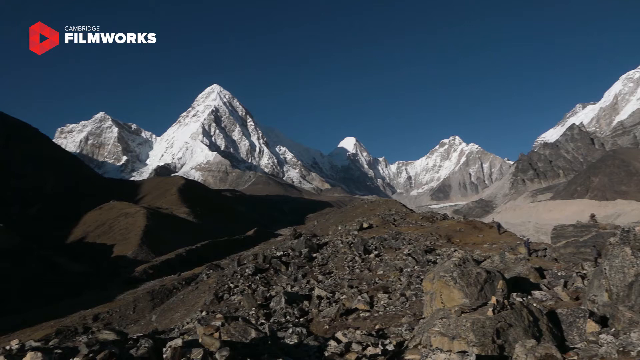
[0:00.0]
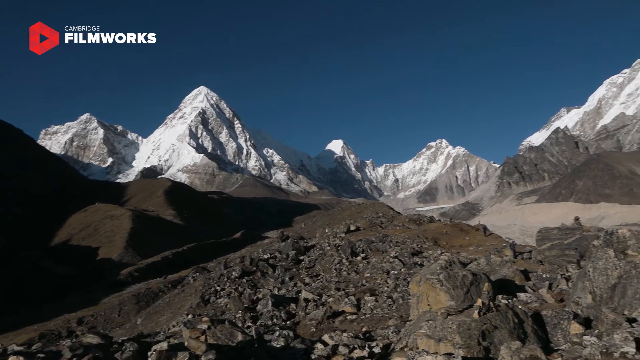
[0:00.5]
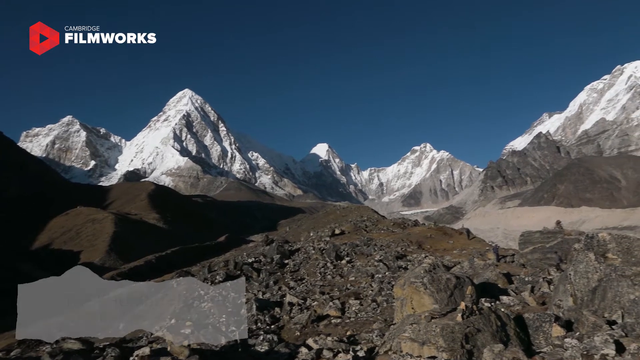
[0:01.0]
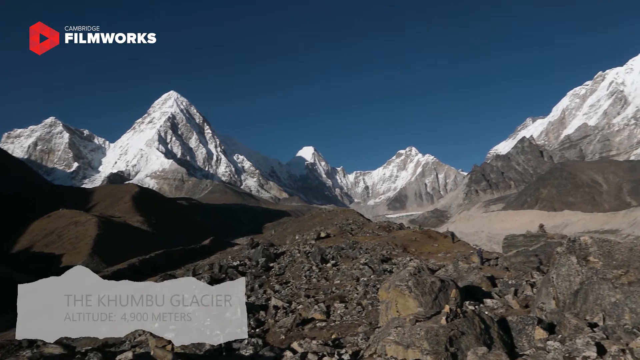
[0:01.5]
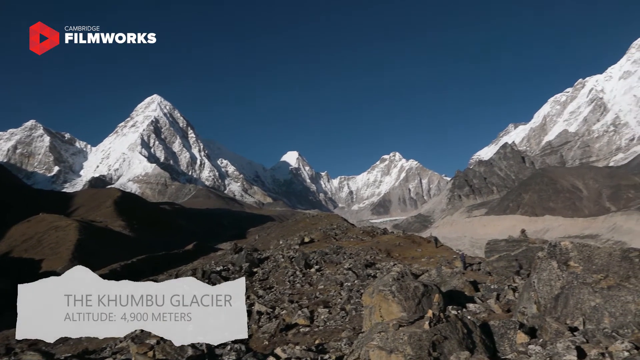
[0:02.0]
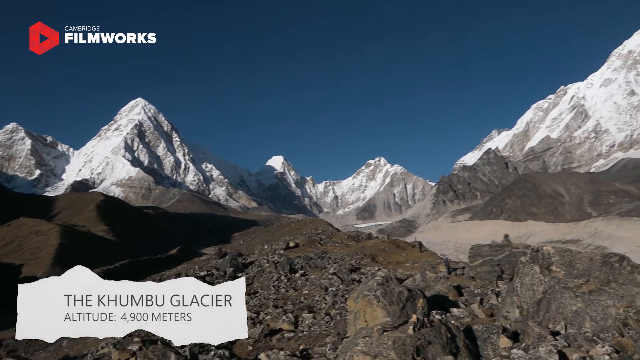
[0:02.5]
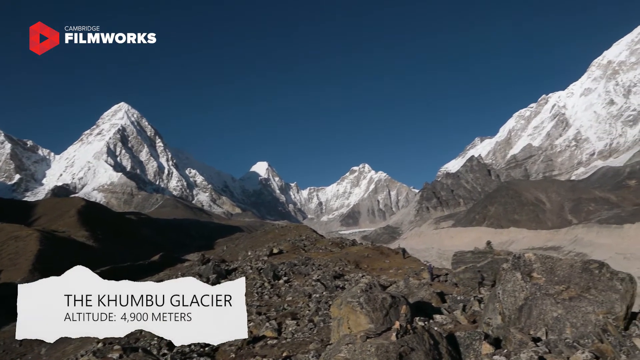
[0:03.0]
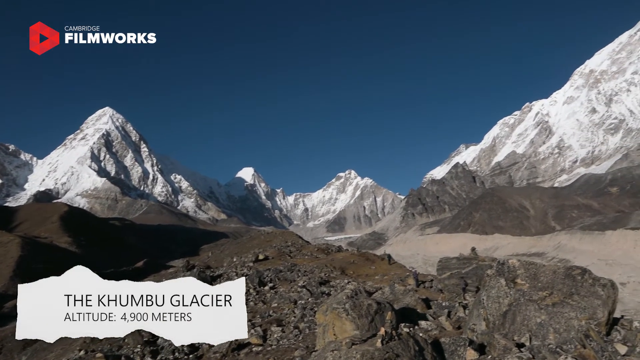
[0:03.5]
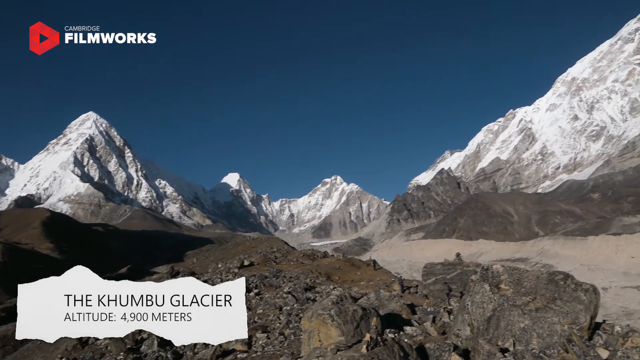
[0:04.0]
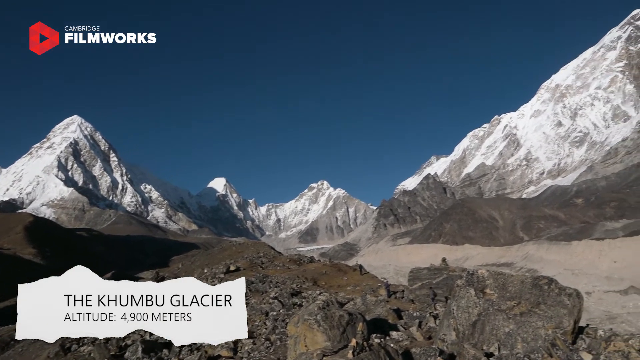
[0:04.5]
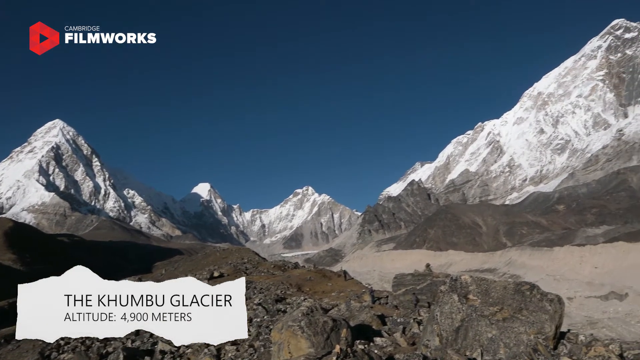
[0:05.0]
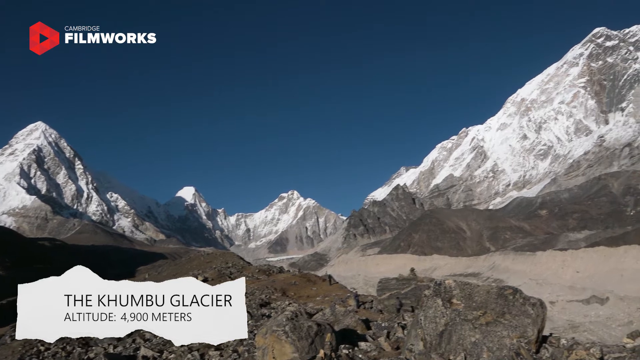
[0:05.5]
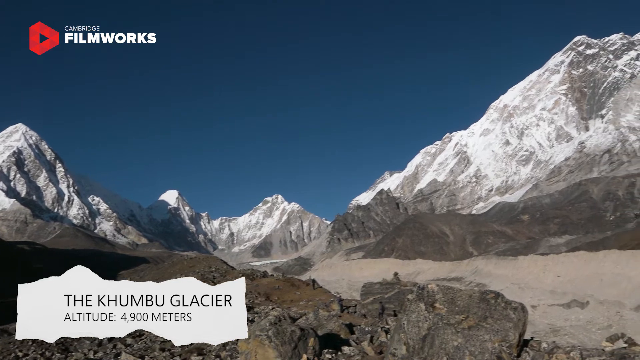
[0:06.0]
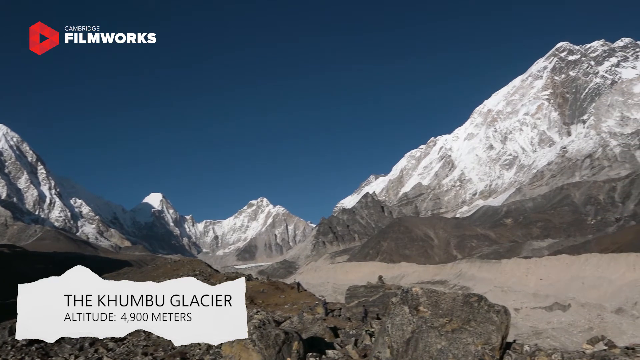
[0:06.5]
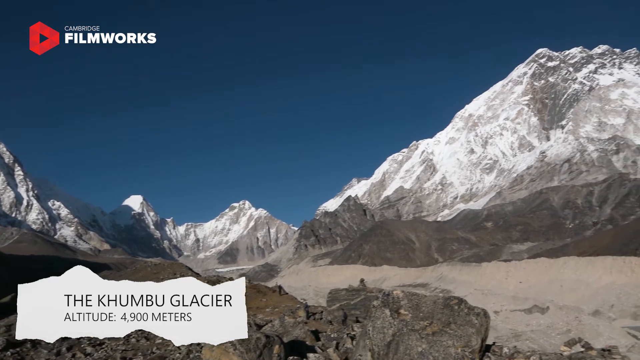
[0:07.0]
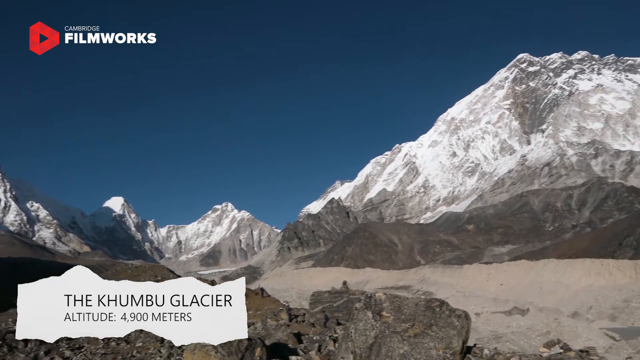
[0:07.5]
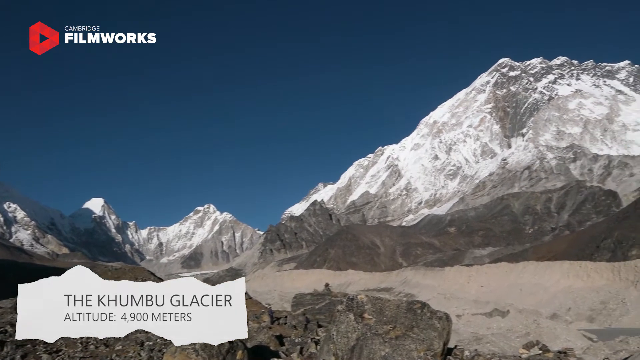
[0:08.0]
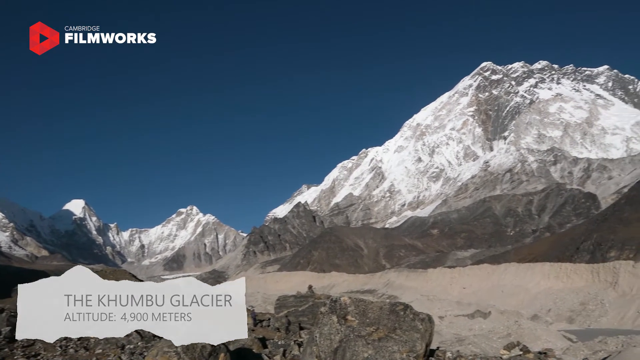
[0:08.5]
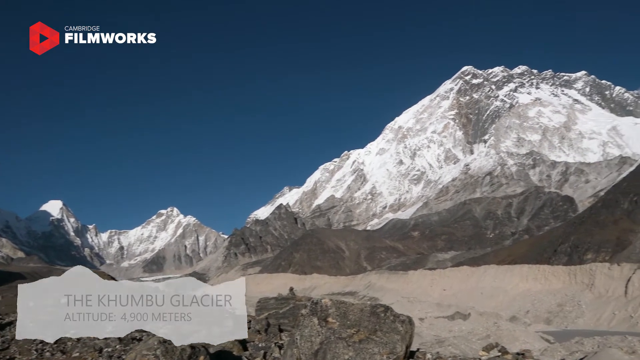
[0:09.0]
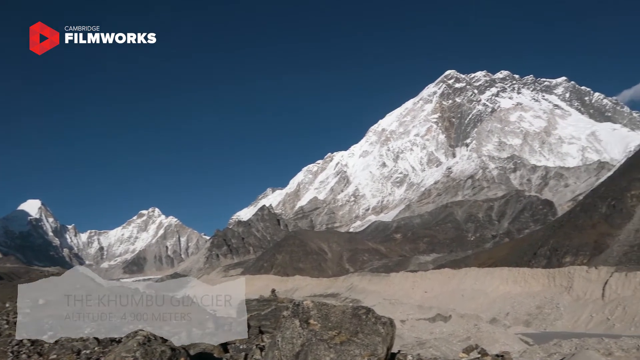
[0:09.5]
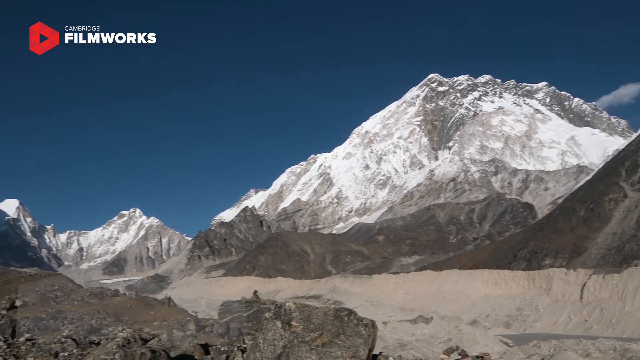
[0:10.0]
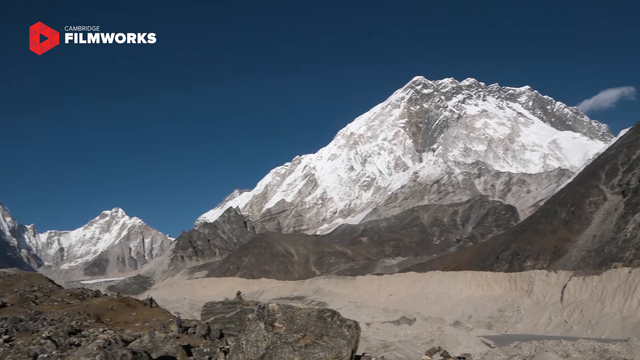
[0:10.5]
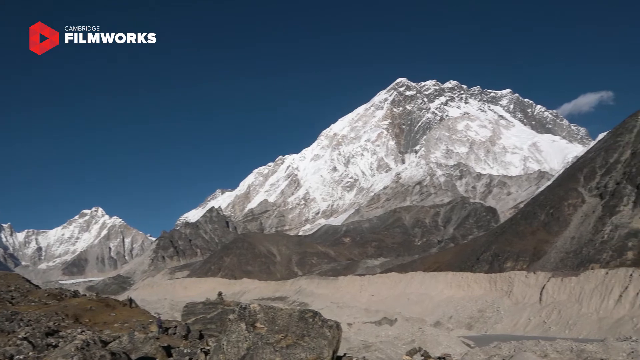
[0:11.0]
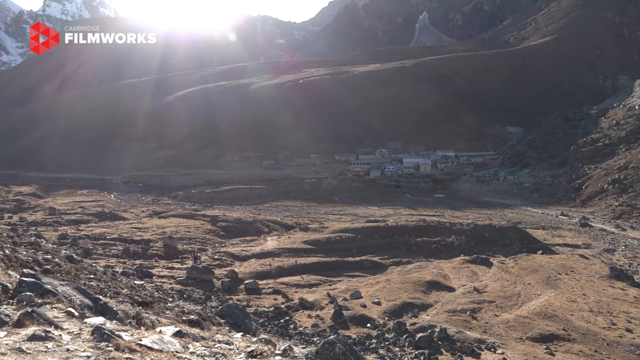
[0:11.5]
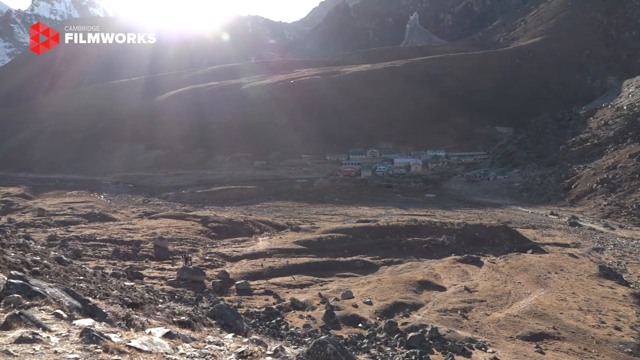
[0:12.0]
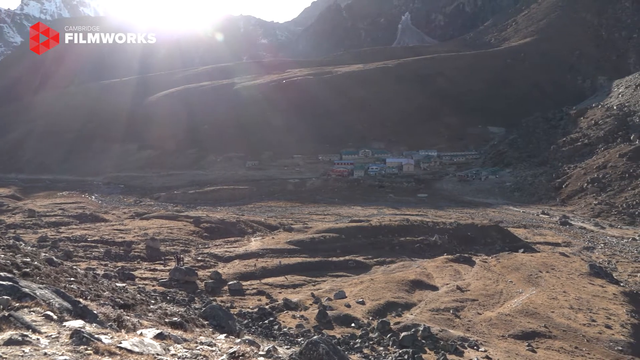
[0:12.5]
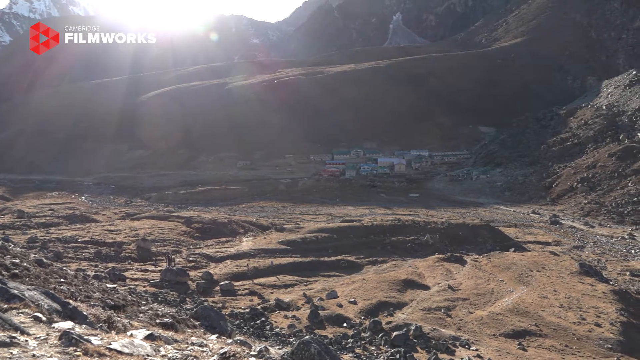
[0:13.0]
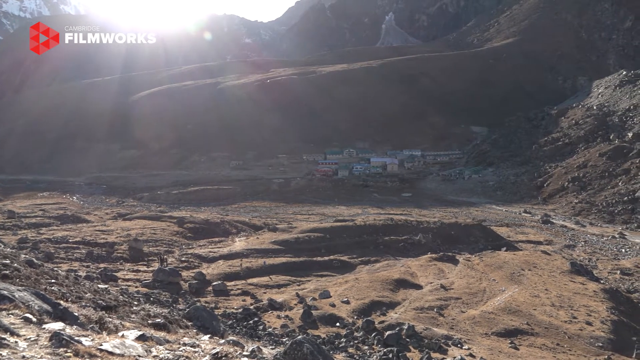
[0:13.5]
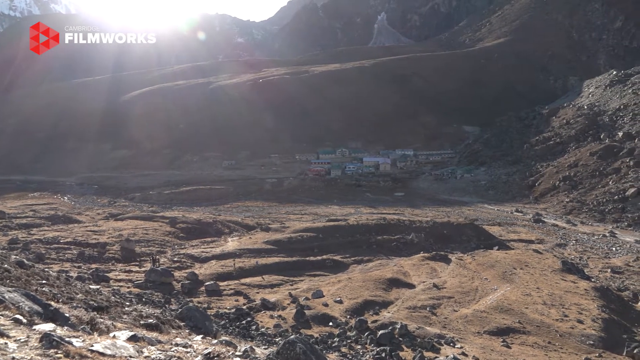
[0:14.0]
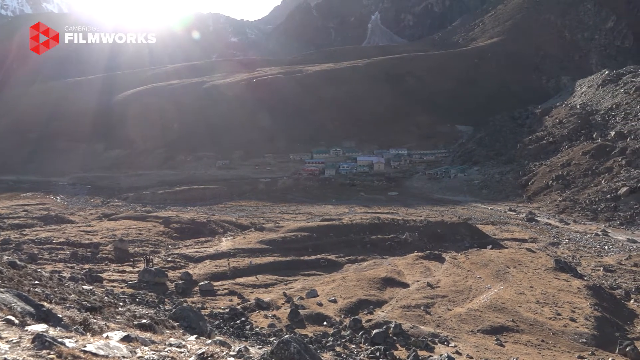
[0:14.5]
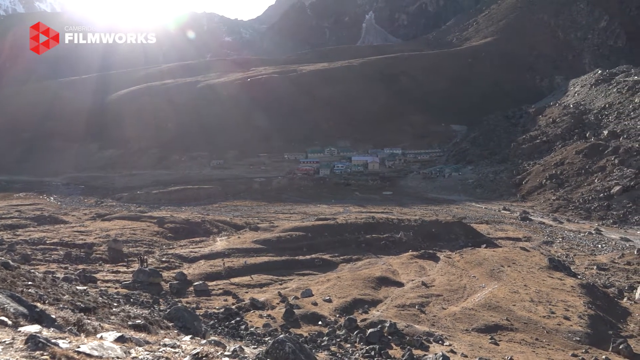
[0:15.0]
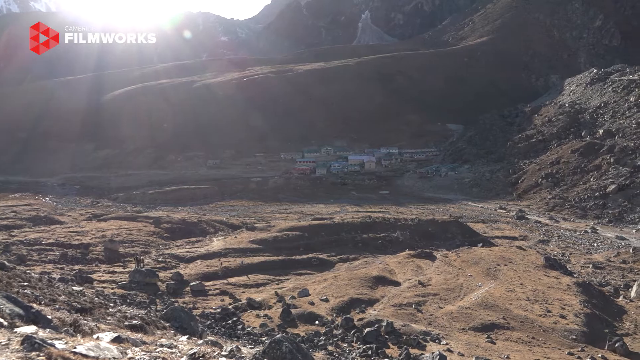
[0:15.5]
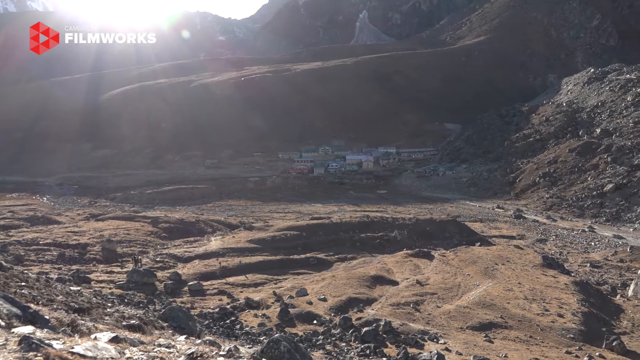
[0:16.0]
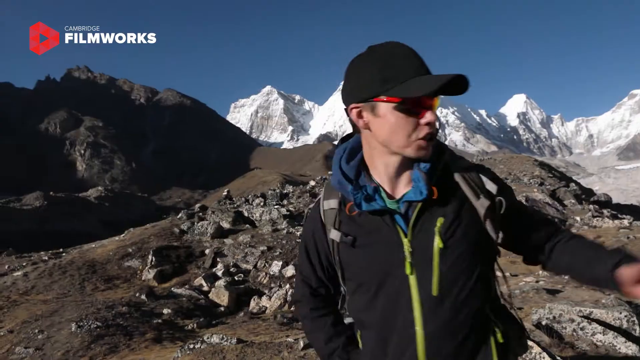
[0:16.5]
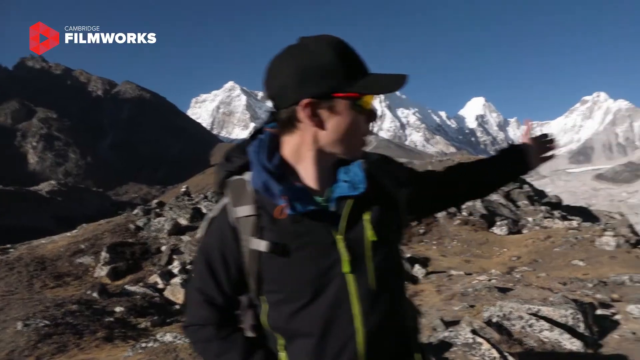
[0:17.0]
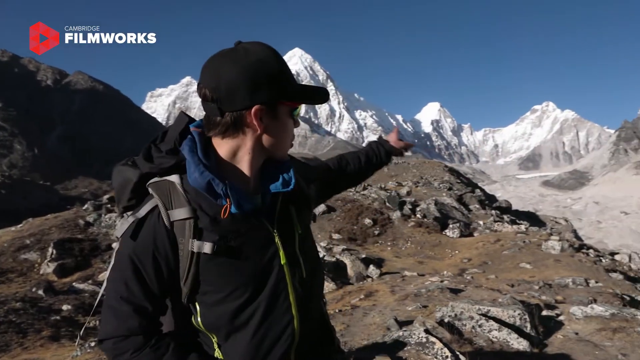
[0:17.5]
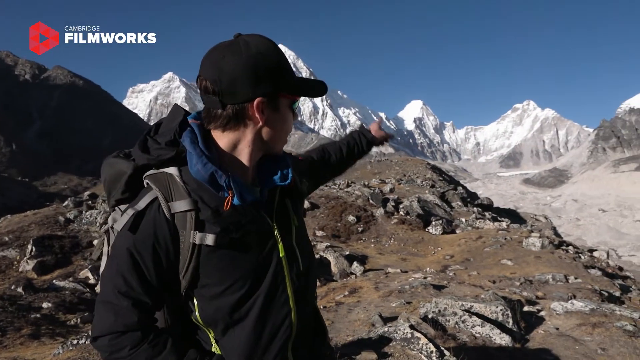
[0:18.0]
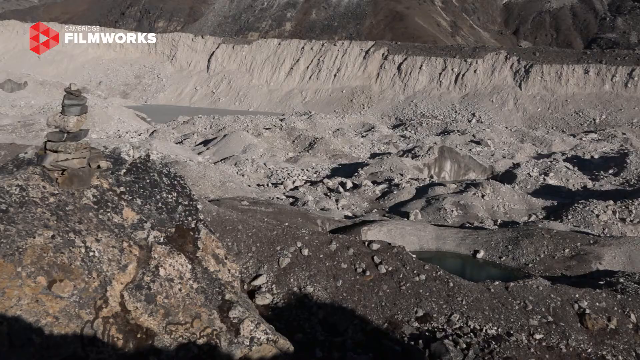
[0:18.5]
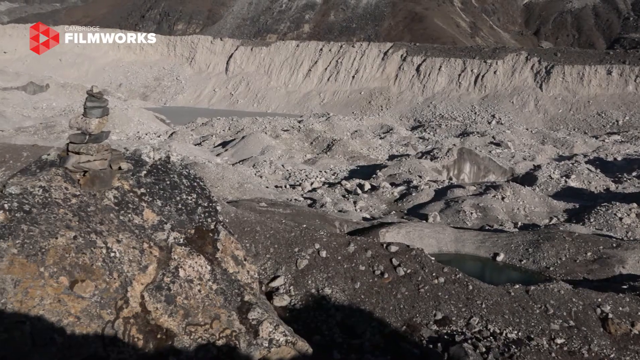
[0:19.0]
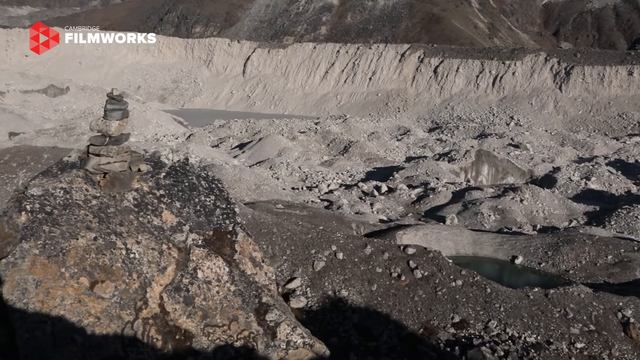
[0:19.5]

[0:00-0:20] The video, from Cambridge Filmworks, shows the Khumbu Glacier, spelled K-H-U-M-B-U, at an altitude of 4,900 meters. A cinematic daytime landscape shot shows the whole scenery: ice-capped mountaintops and a small town at the base of the mountain with small tenements or buildings. It cuts to a hiker, a white man in his 20s wearing sunglasses, a black baseball cap and a black jacket. He points at something behind him, at the snowy part, which may be the glacier. The camera then zooms in on the mountain's base.